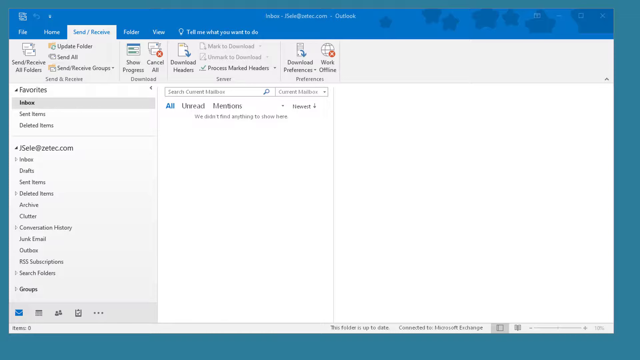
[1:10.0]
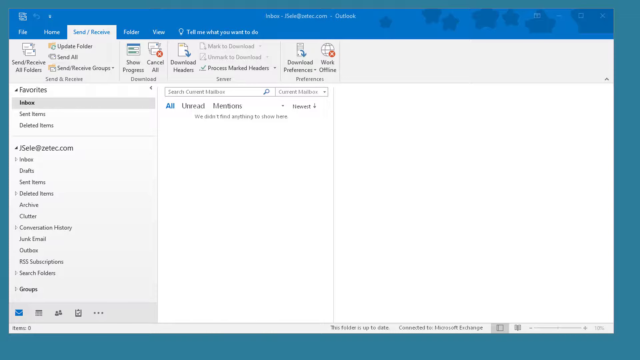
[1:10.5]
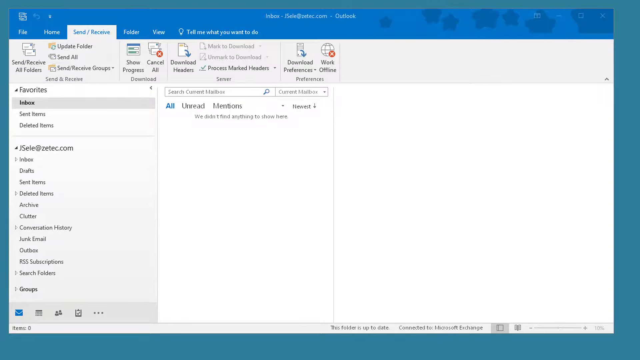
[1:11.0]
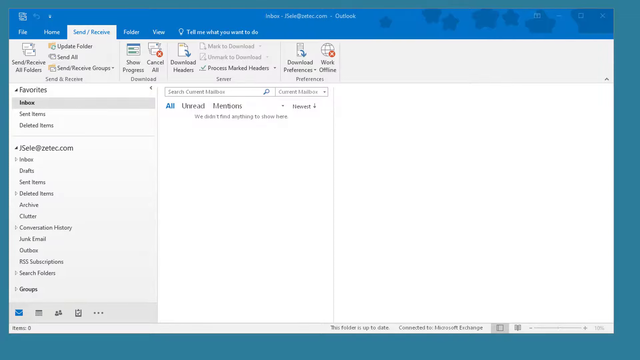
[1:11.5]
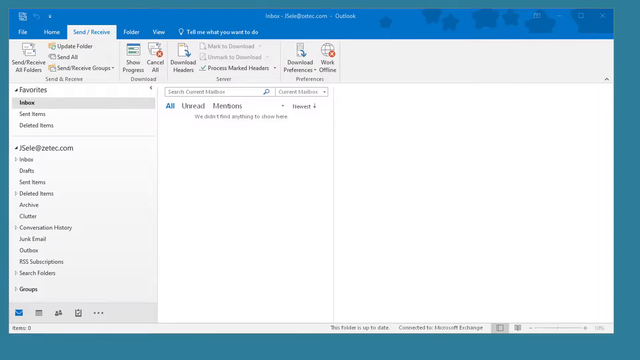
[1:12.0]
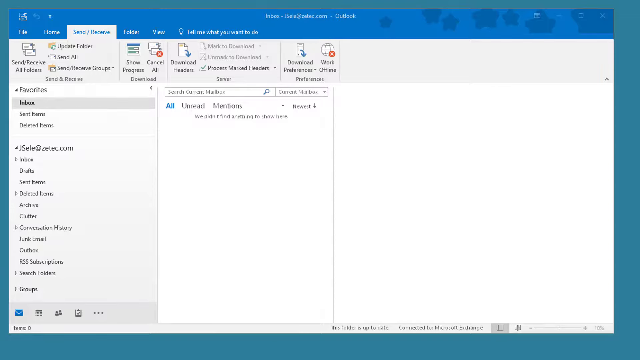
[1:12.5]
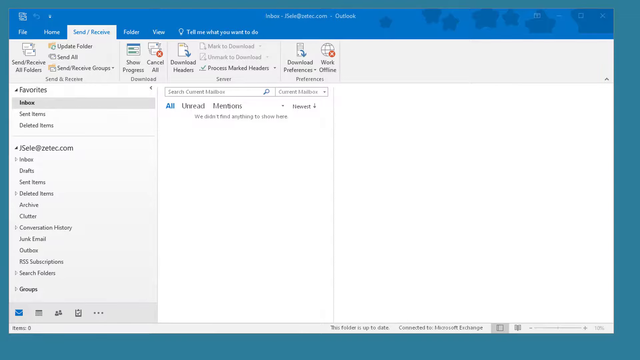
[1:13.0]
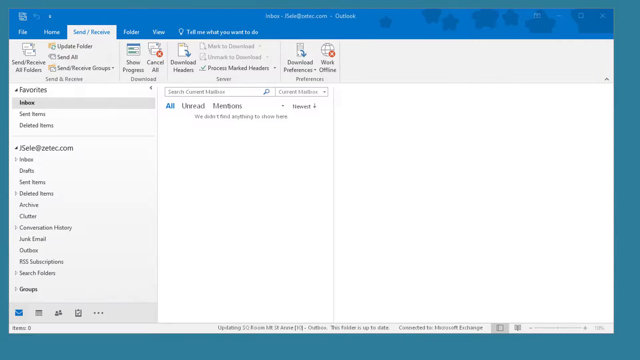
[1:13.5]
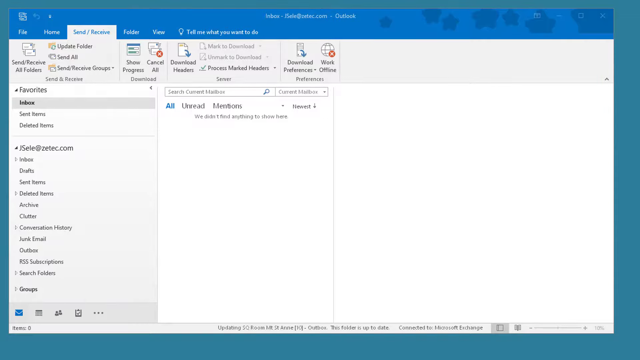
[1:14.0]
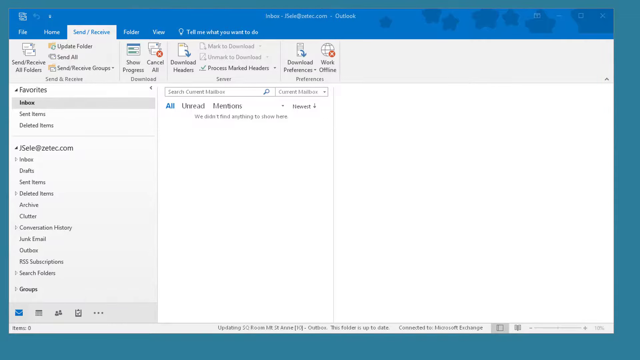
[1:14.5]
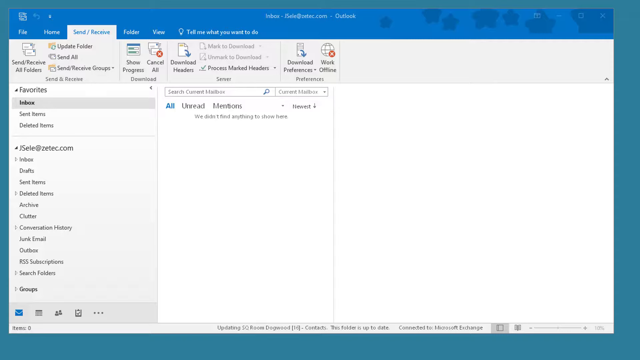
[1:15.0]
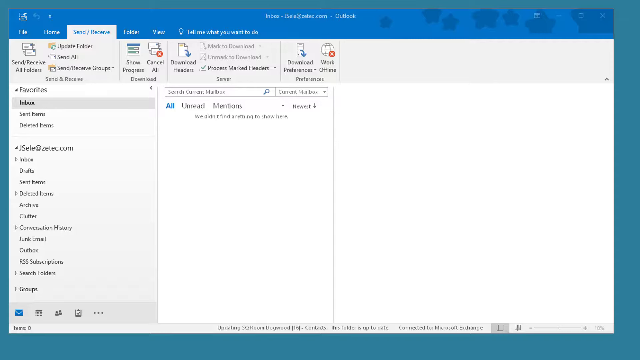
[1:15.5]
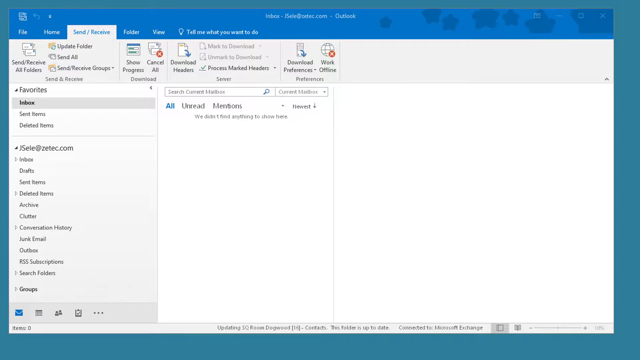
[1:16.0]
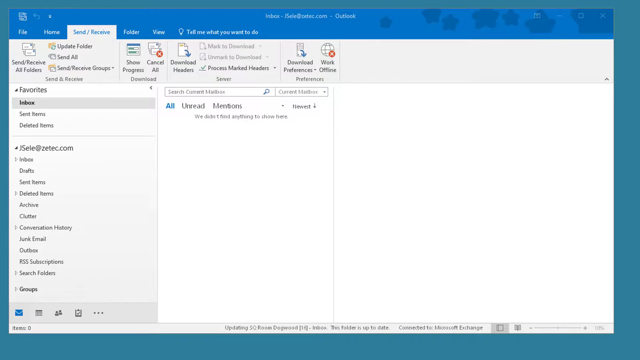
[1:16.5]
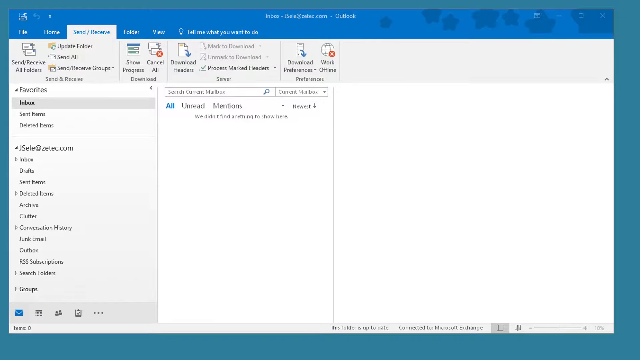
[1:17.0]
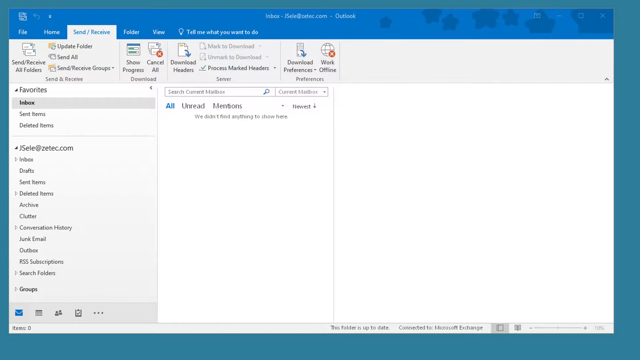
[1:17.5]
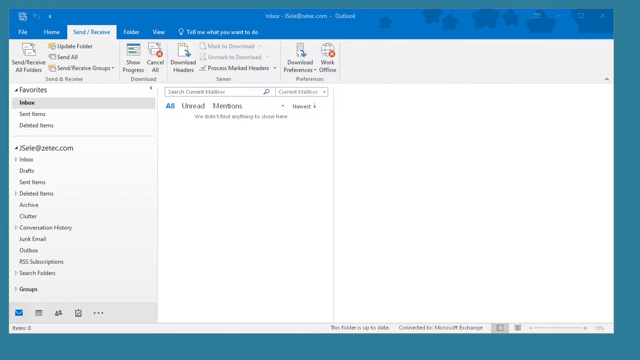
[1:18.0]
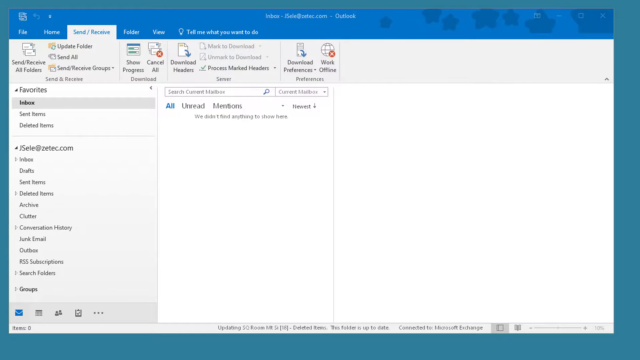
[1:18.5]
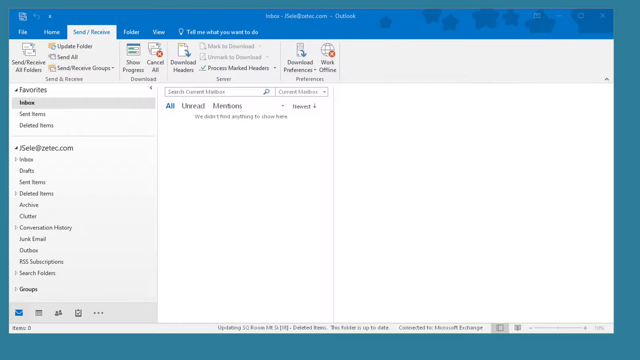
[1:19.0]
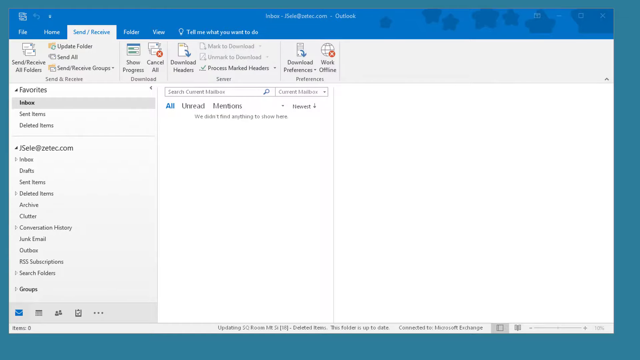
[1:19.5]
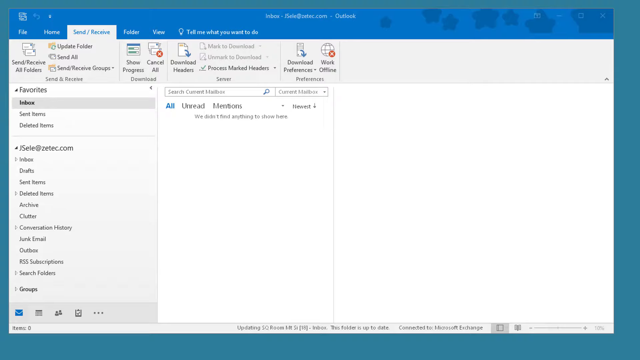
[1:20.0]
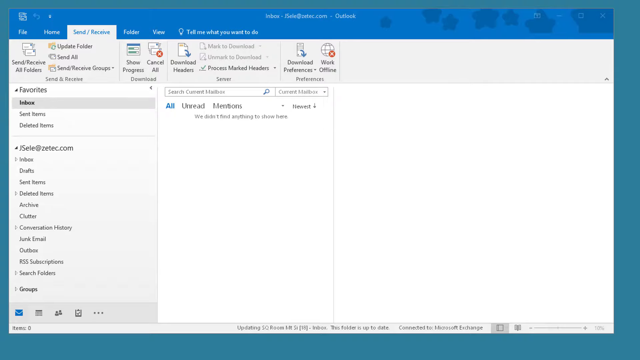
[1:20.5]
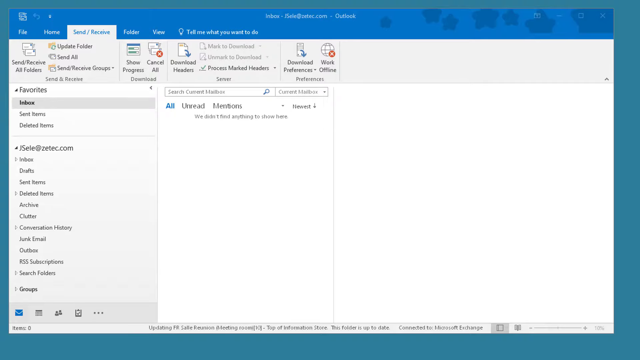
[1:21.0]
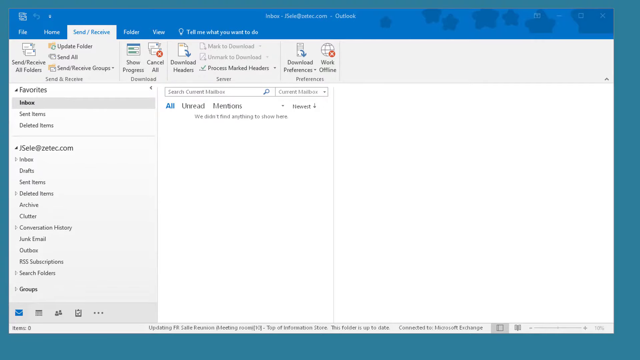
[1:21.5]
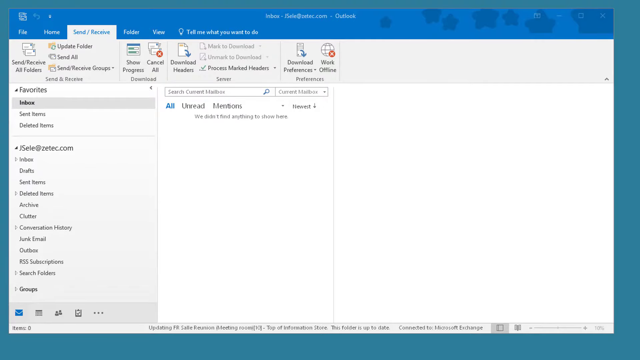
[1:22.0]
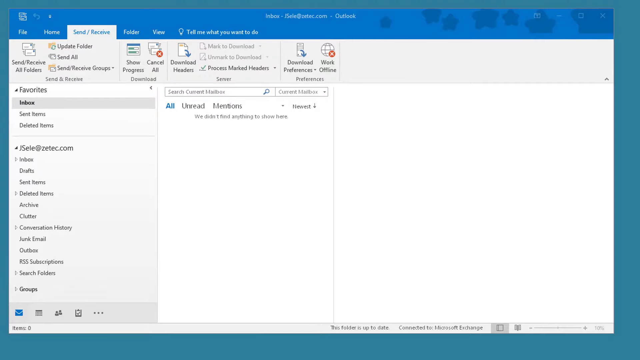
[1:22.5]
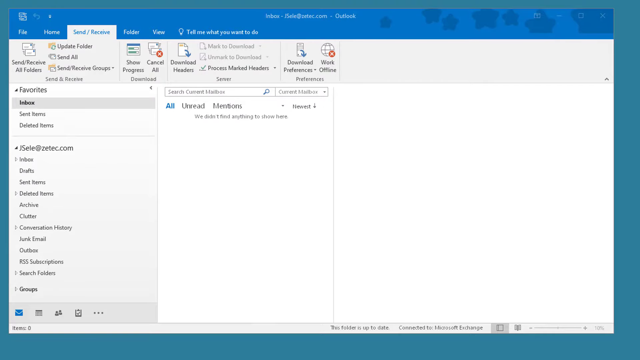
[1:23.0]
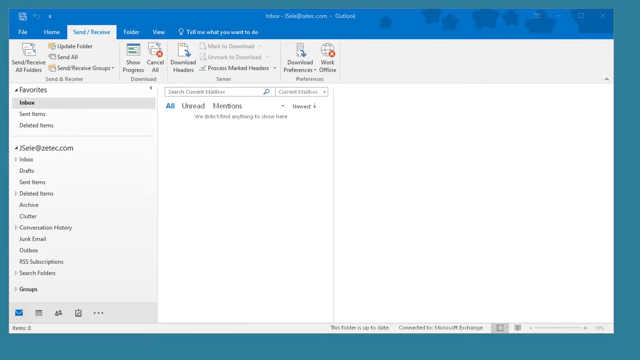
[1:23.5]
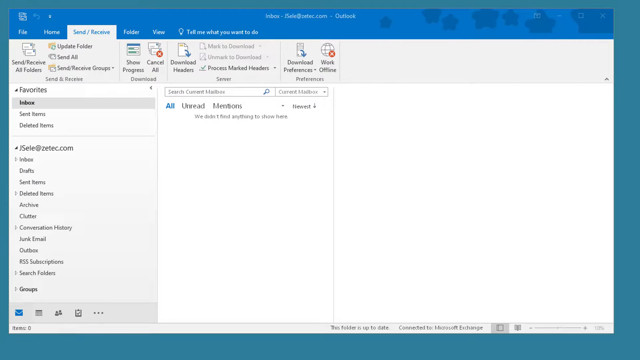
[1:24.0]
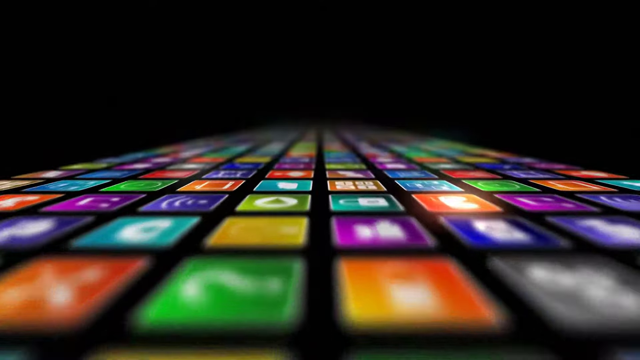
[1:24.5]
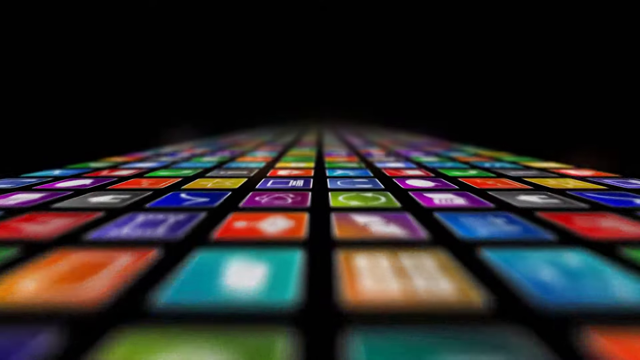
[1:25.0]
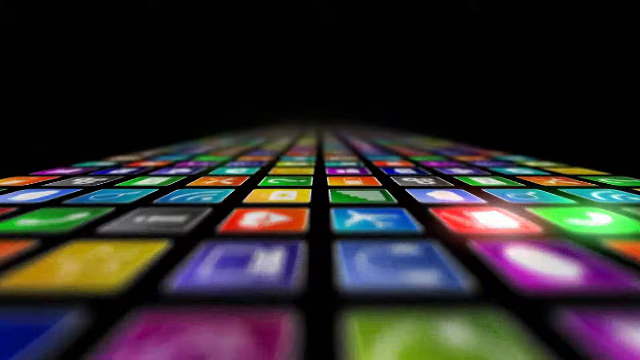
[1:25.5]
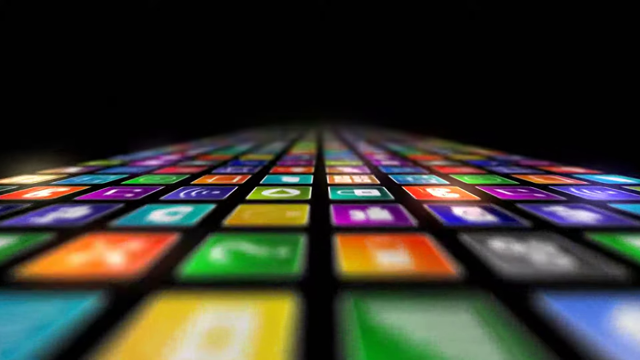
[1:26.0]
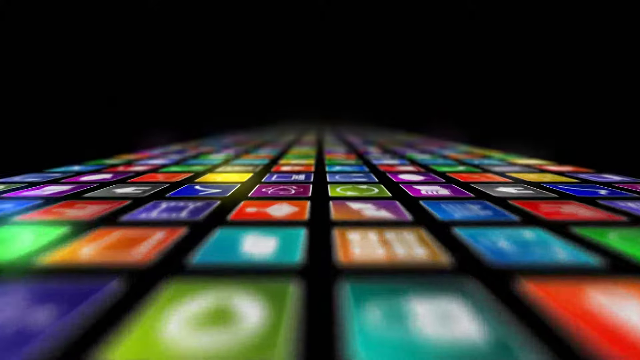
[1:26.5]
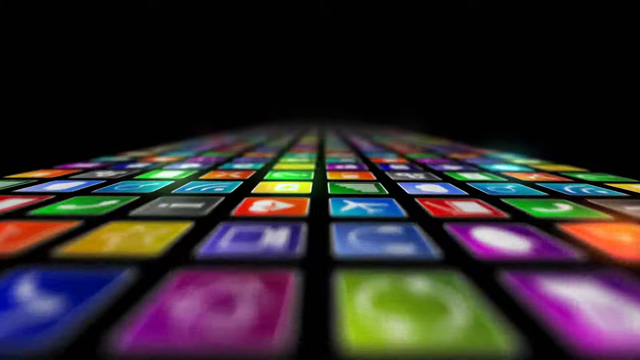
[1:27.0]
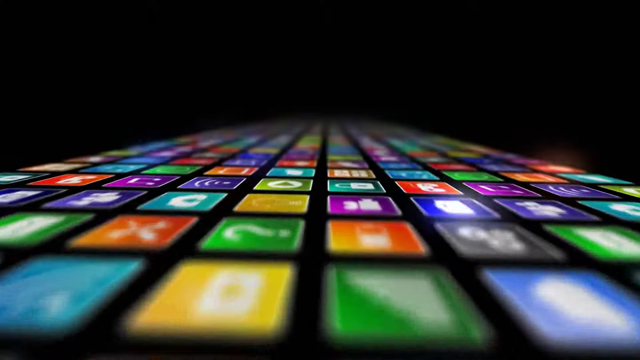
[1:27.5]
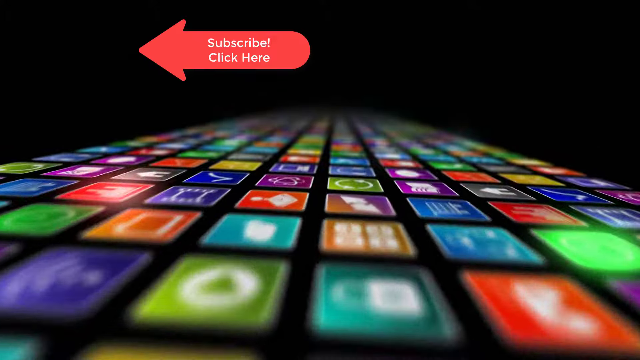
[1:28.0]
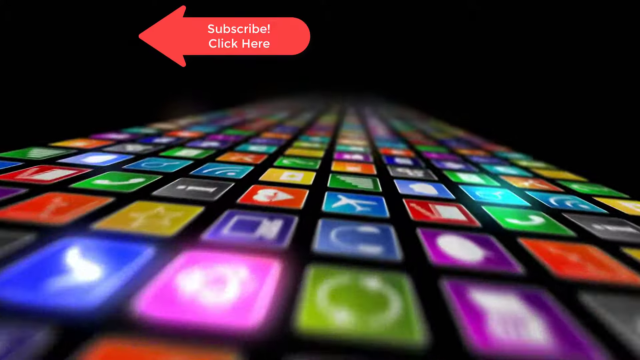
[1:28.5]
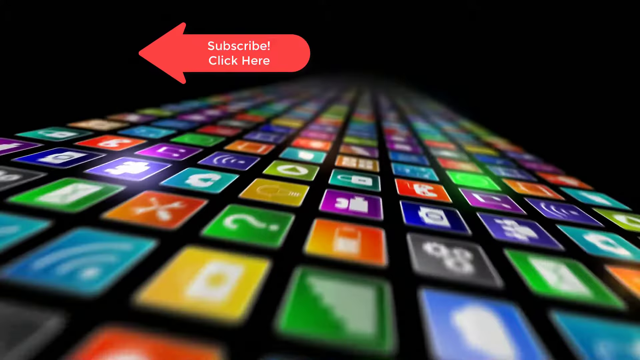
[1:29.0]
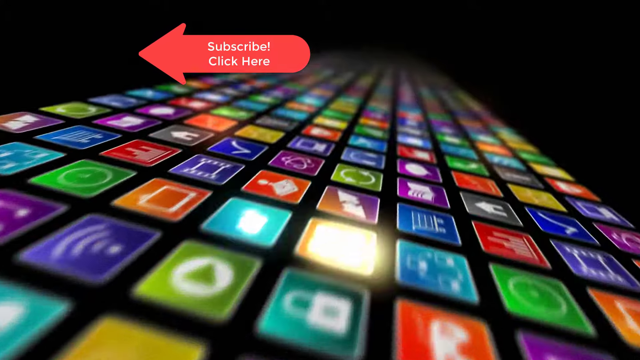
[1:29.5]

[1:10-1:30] The email account of Jay Celeste tries to update, but nothing comes through. The view then cuts across to what looks like a screen of apps, with a subscribe button in the top left corner and a prompt to click here. The app symbols seem fairly obscure; among them are a home symbol that looks like a home, a headphone symbol, a monitor symbol and a talk sign.